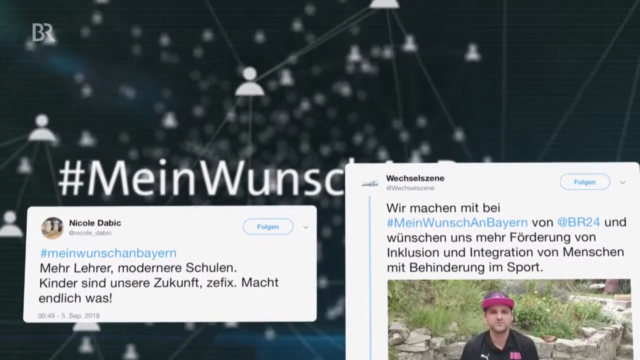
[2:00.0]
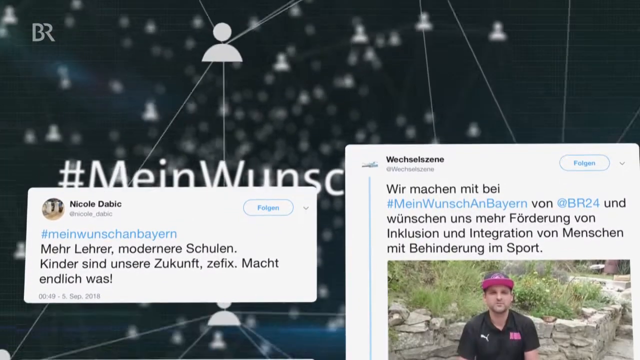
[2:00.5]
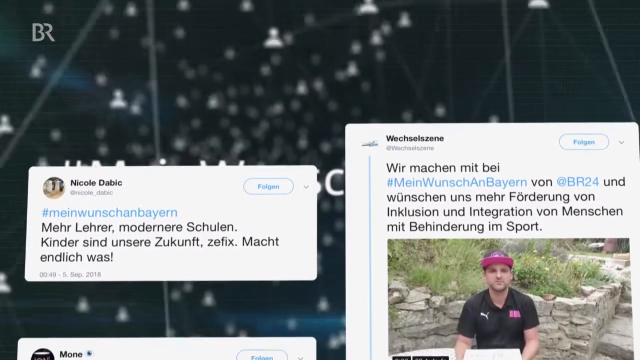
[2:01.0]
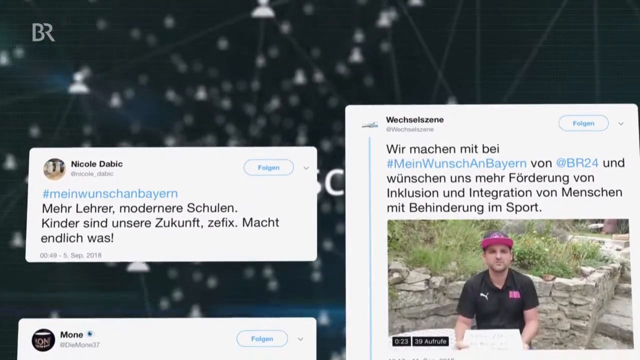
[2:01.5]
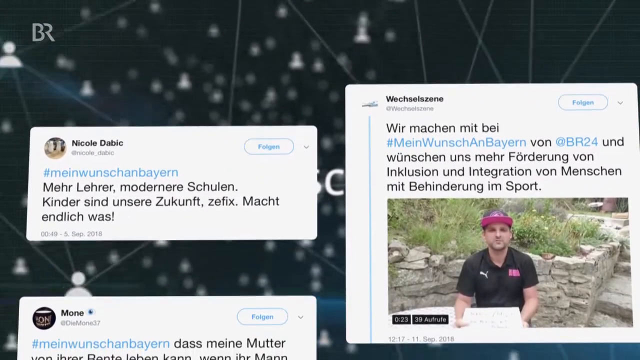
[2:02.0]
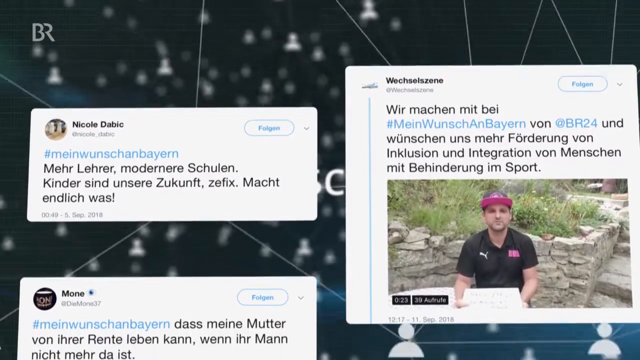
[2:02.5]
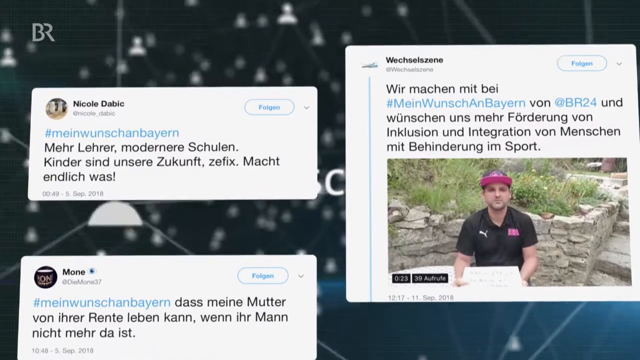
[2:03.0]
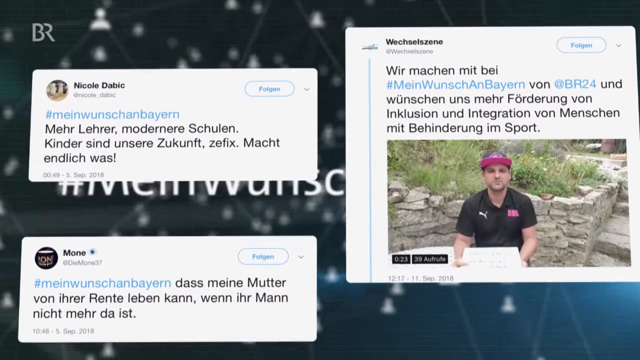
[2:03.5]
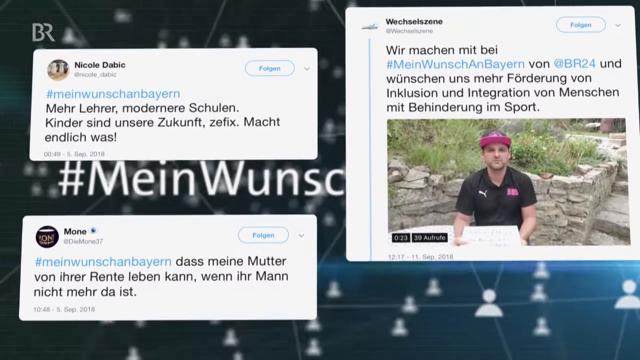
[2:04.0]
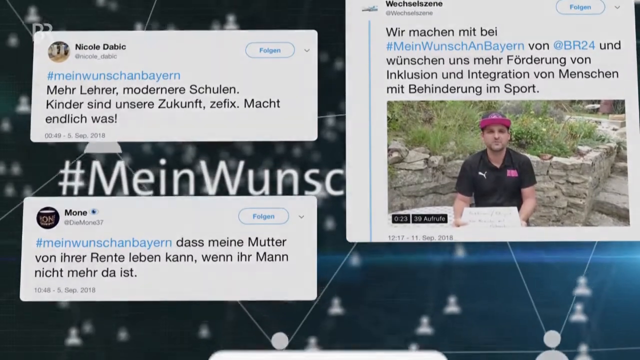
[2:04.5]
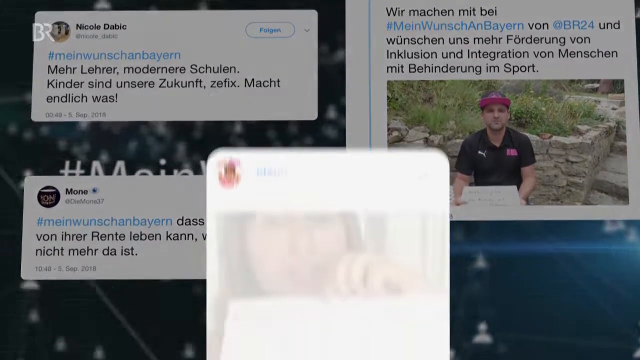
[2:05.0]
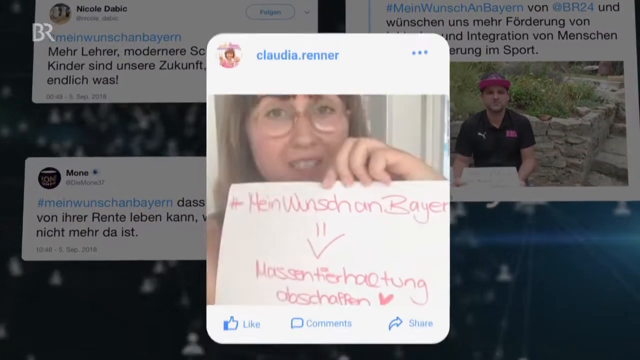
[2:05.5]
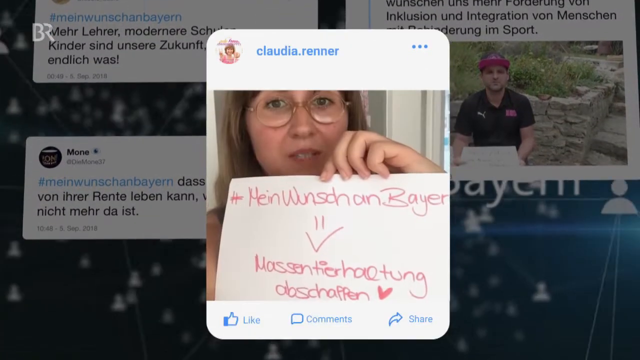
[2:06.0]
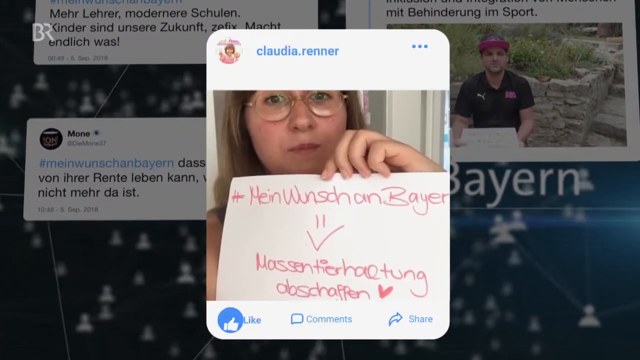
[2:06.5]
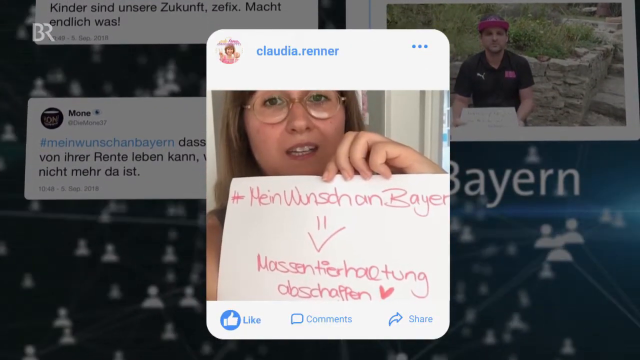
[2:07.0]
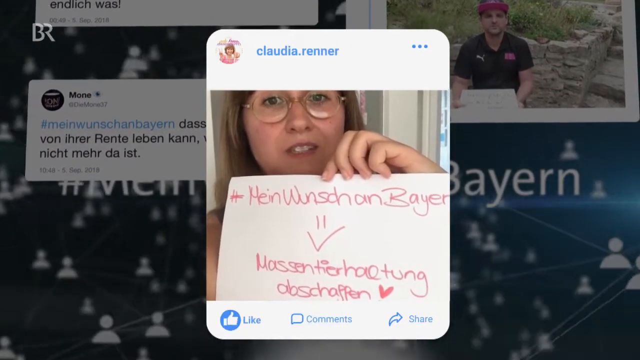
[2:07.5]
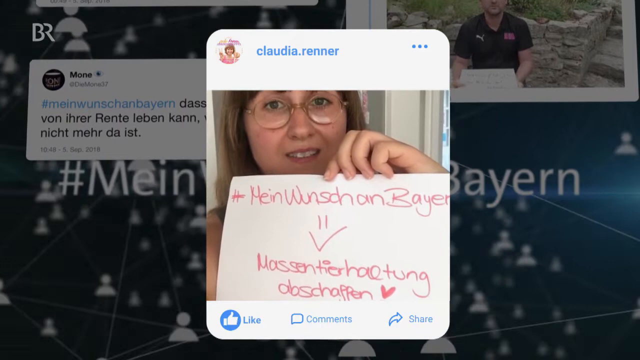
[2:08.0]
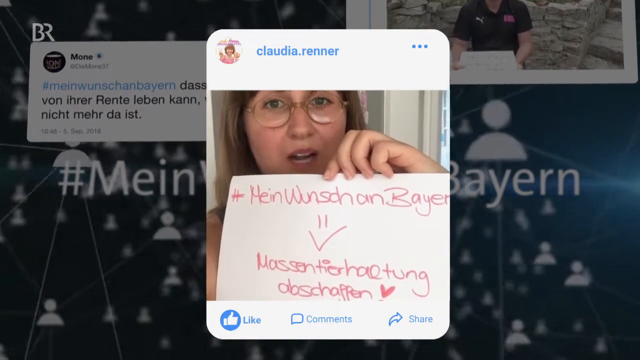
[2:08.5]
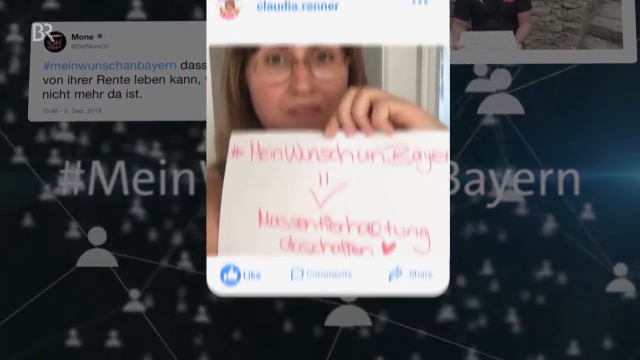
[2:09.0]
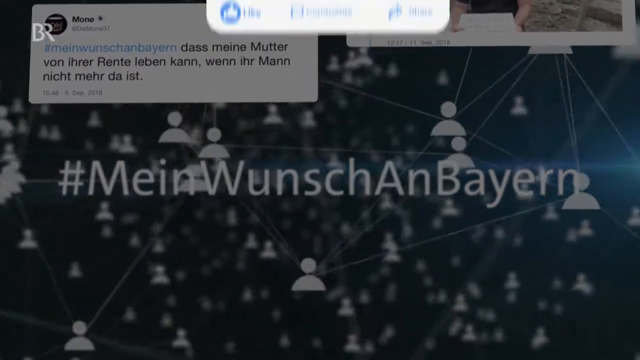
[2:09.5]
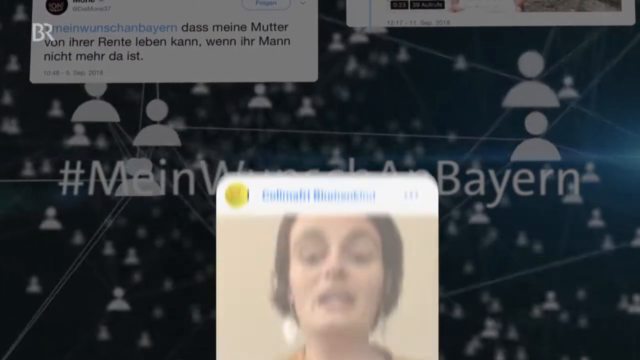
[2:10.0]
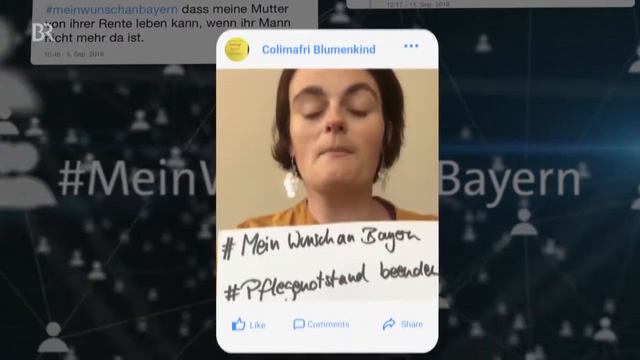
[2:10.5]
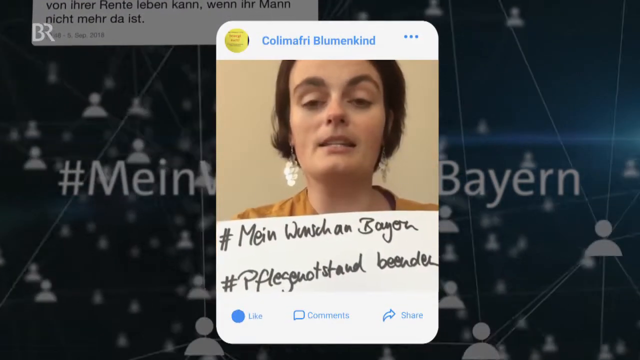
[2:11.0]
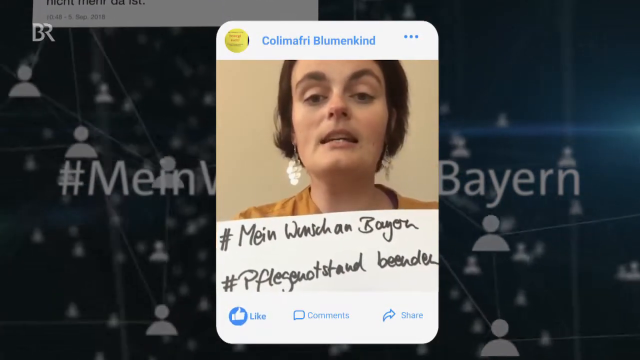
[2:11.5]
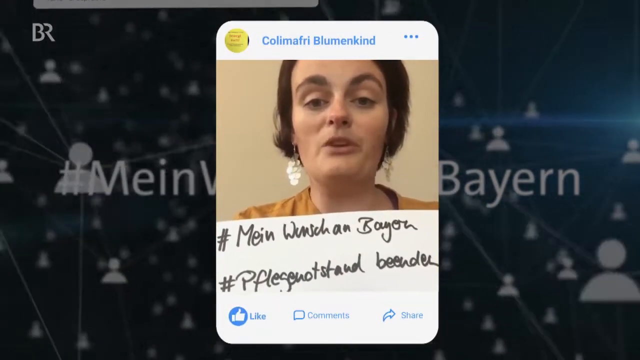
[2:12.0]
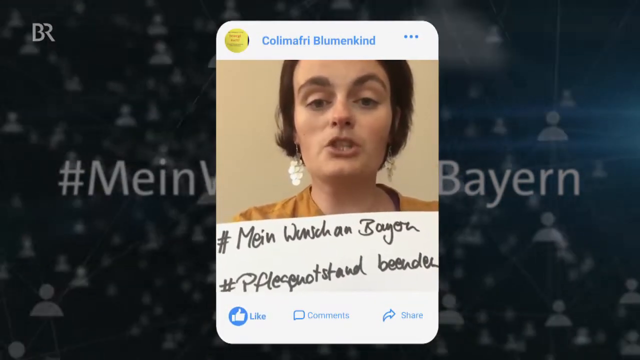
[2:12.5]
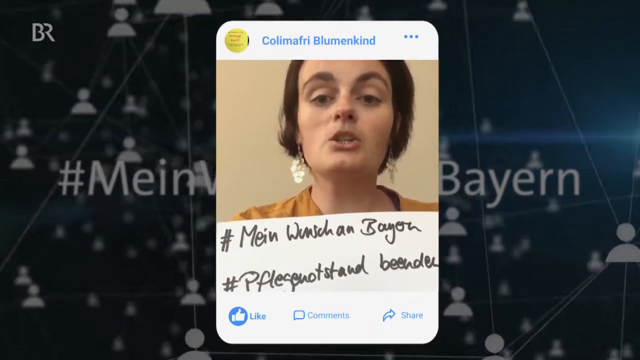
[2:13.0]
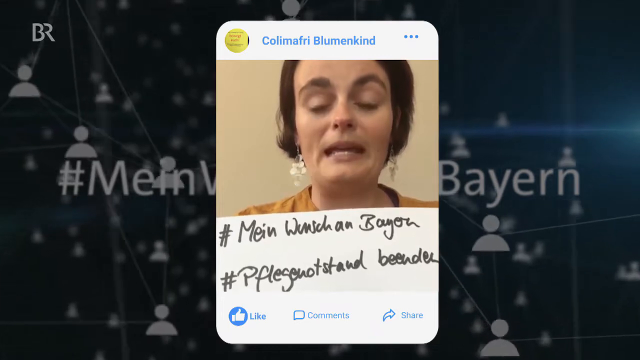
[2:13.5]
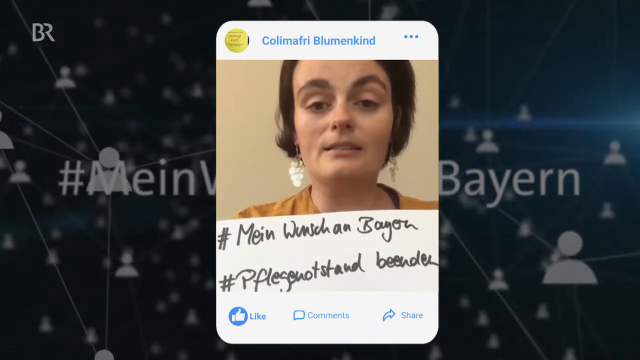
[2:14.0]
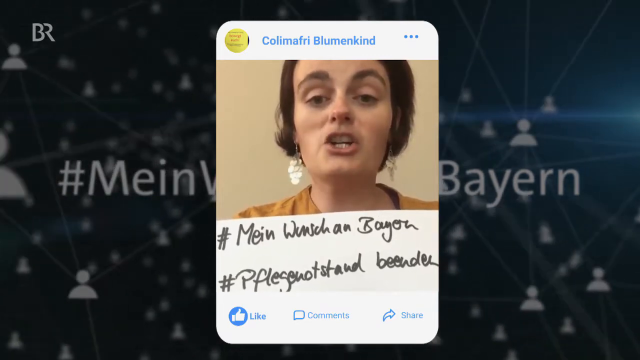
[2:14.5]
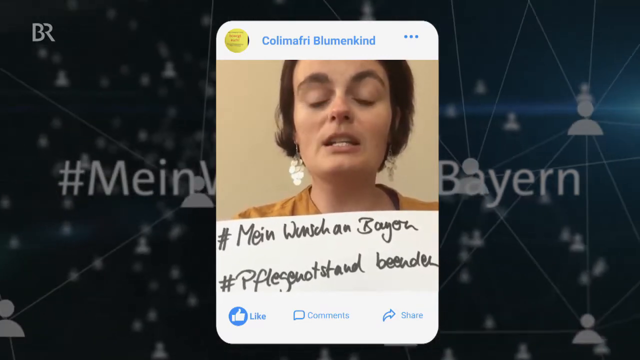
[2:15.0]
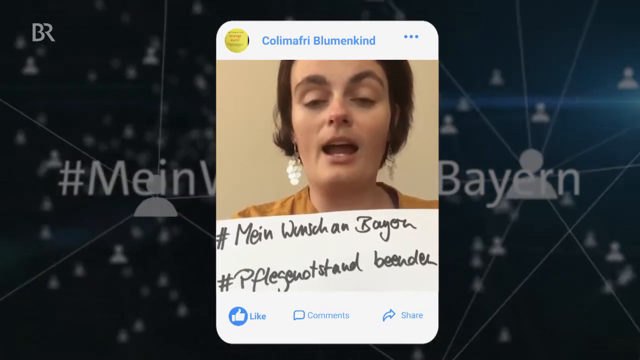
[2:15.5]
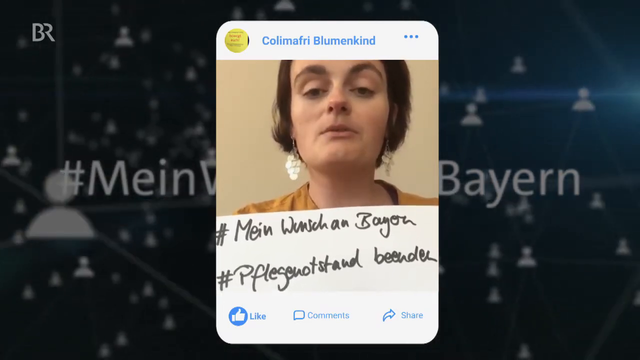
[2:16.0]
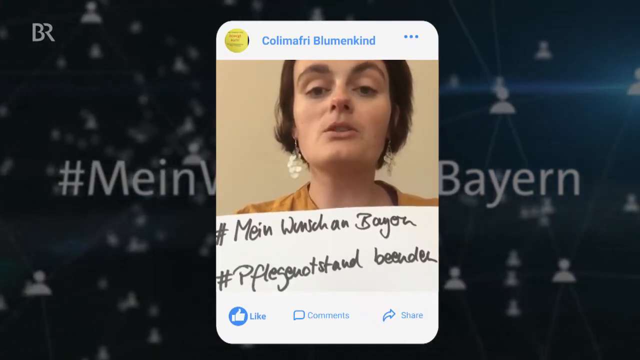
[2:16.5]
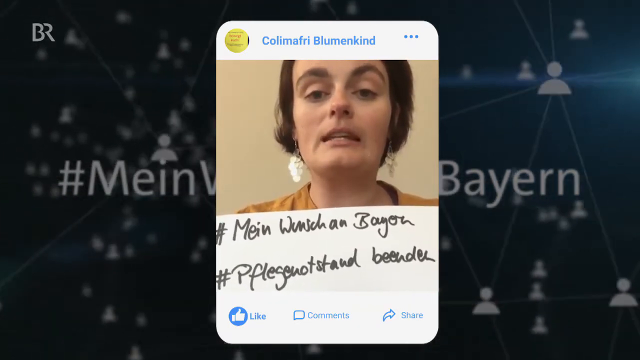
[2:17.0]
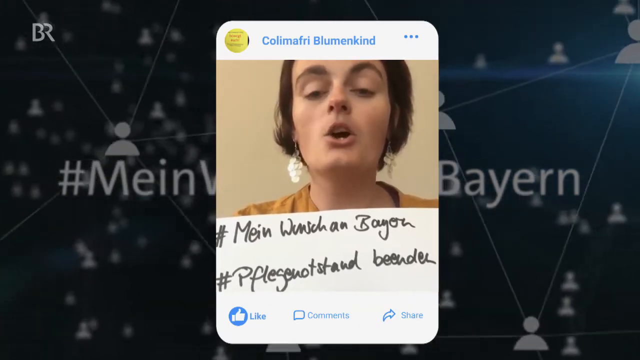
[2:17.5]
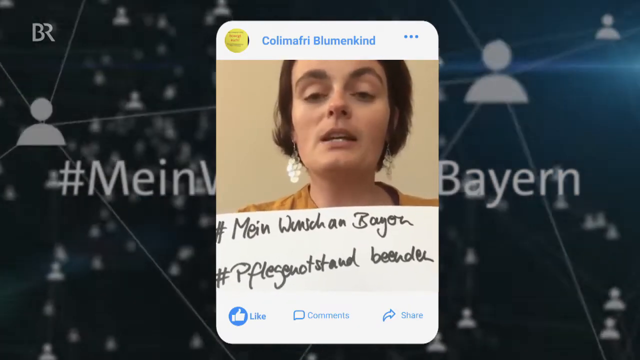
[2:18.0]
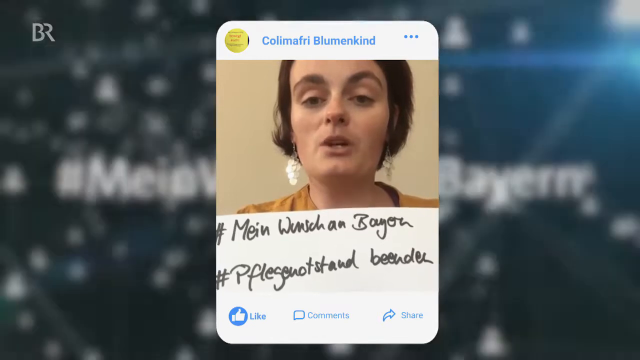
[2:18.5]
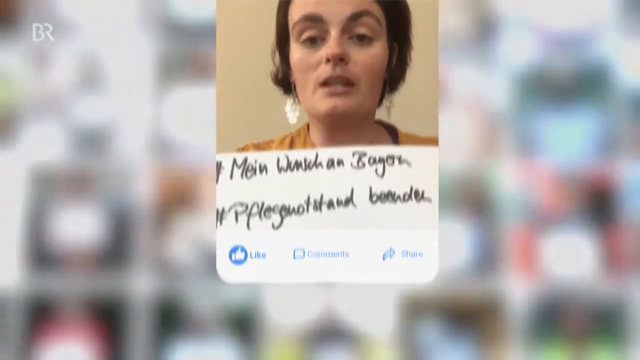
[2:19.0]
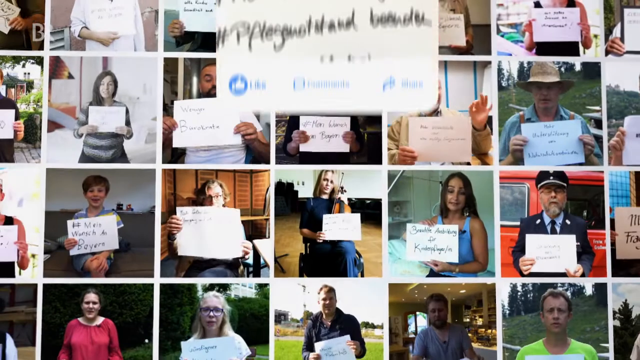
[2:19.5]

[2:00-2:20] The background shows symbols of people with lines drawn between them as though there are connections. A series of tweets comes up. One, from Nicole Dabick, says "Mehr Lehrer, moderne Schulen, Kinder sind unsere Zukunft". Another, from a man whose name cannot be read, says "Wir machen mit bei und wünschen uns mehr Forderung von Inklusion und Integration von Menschen mit".